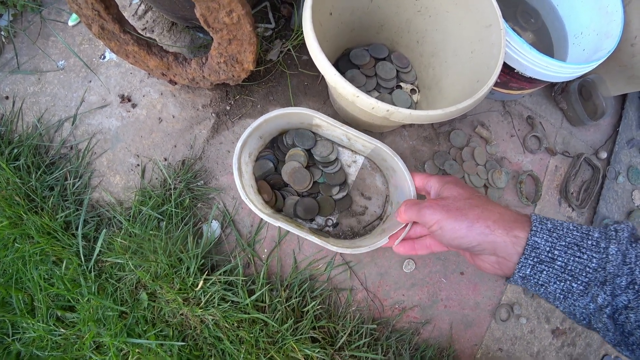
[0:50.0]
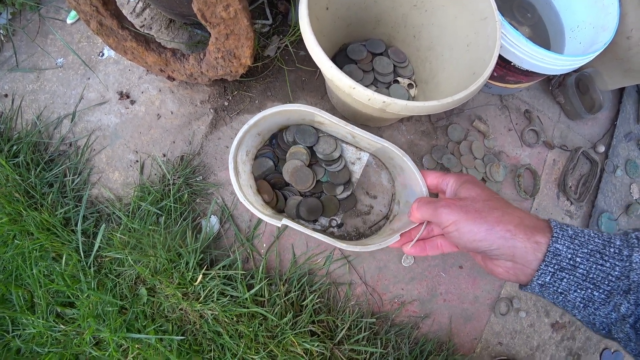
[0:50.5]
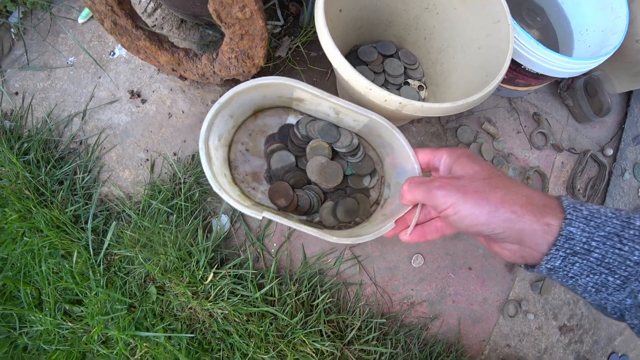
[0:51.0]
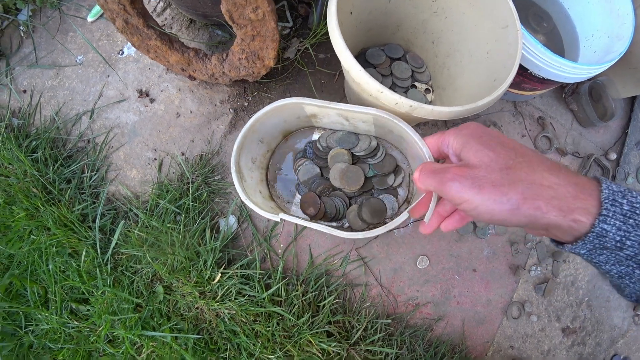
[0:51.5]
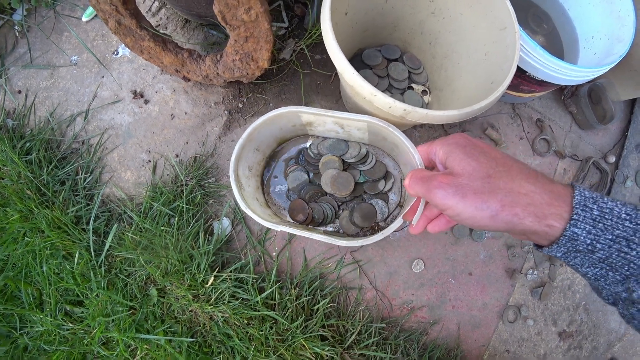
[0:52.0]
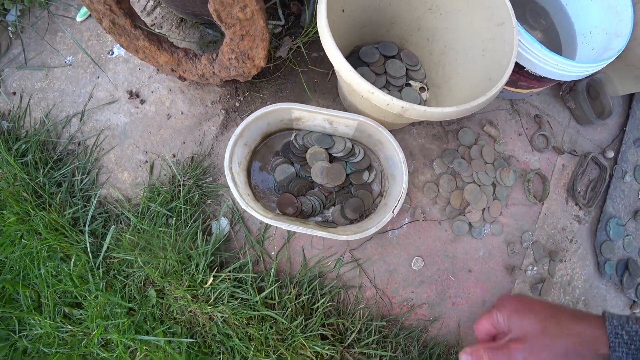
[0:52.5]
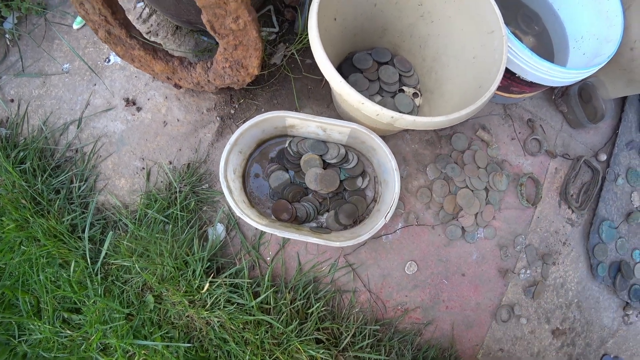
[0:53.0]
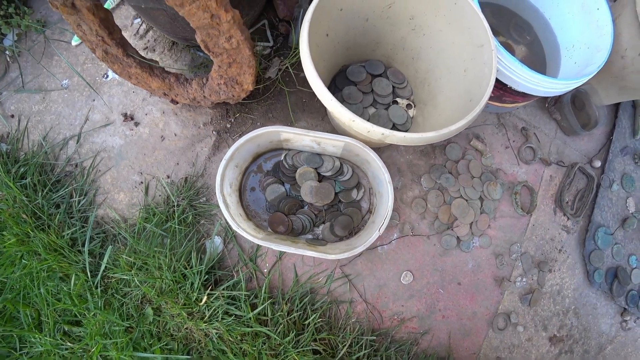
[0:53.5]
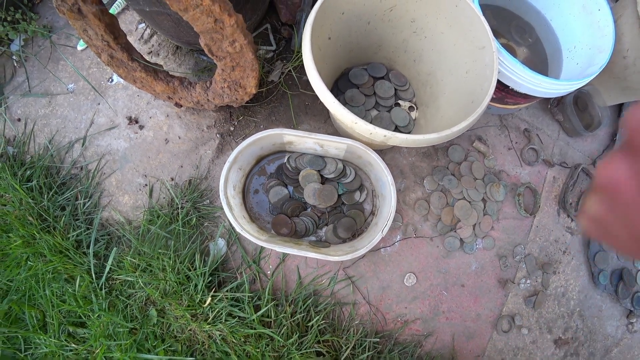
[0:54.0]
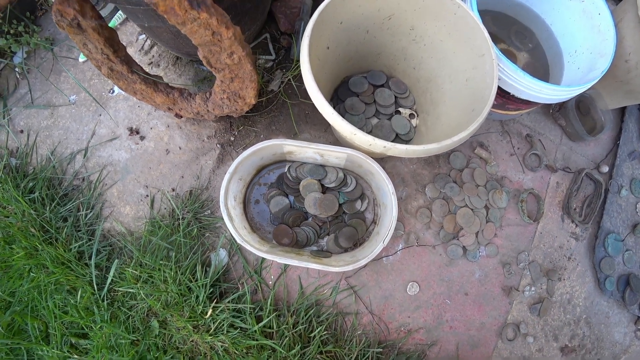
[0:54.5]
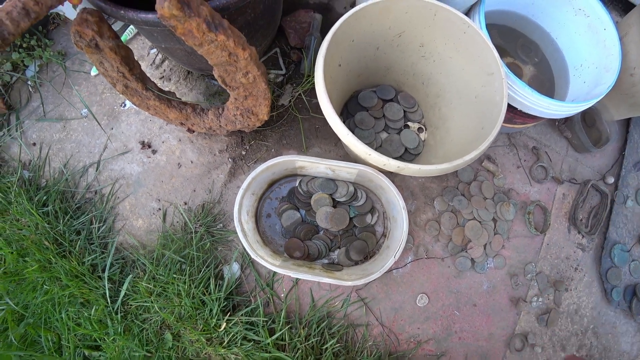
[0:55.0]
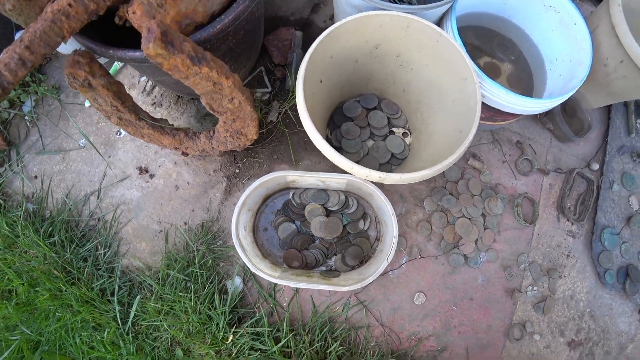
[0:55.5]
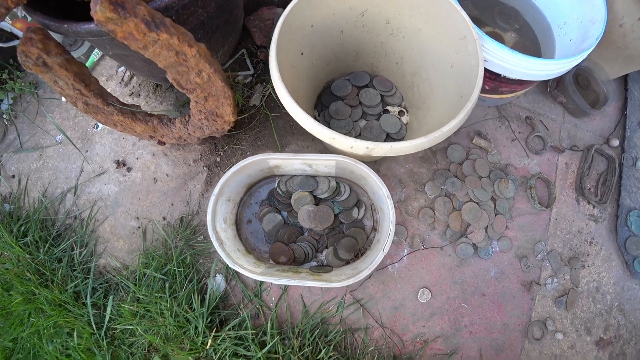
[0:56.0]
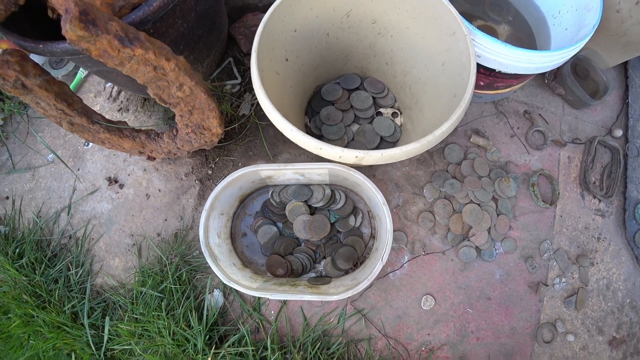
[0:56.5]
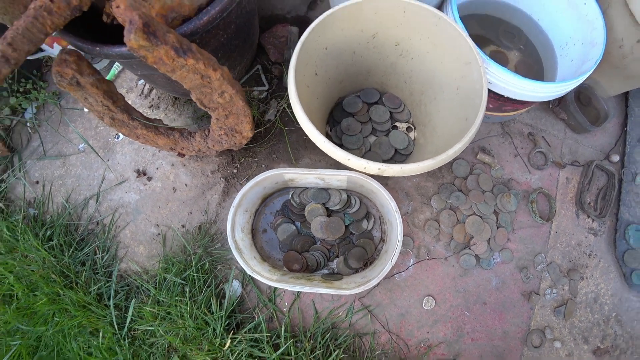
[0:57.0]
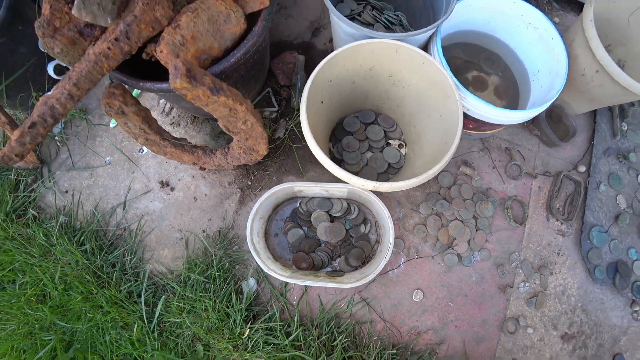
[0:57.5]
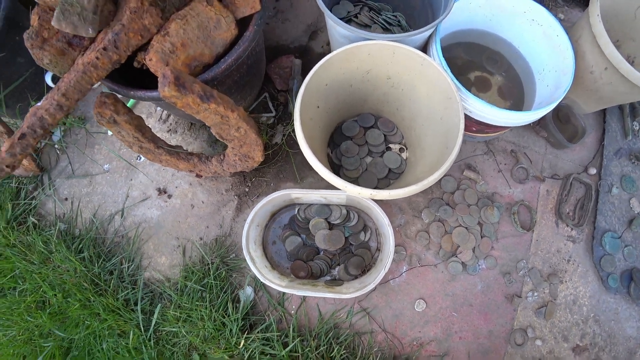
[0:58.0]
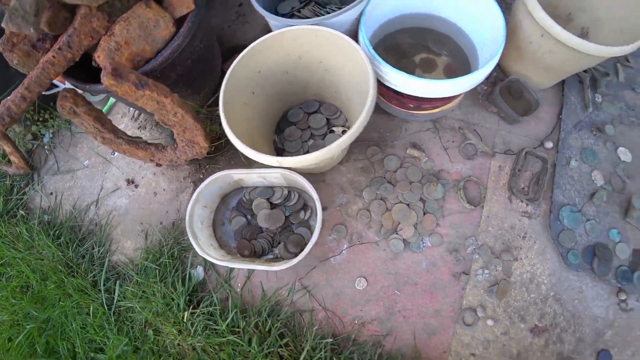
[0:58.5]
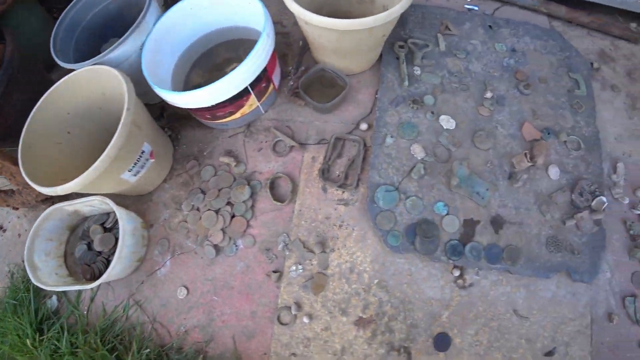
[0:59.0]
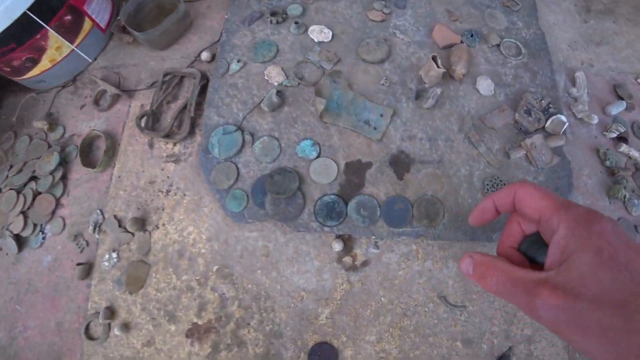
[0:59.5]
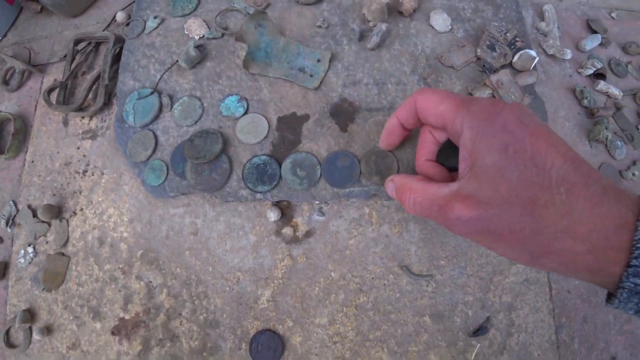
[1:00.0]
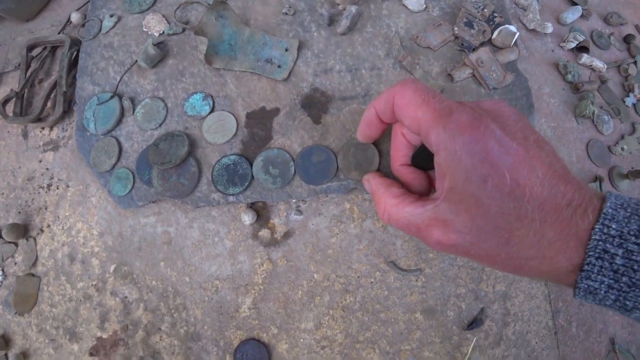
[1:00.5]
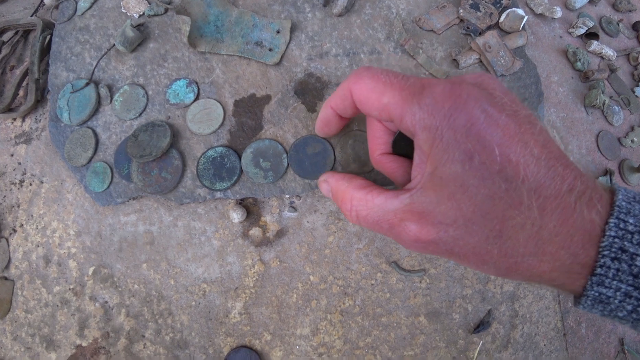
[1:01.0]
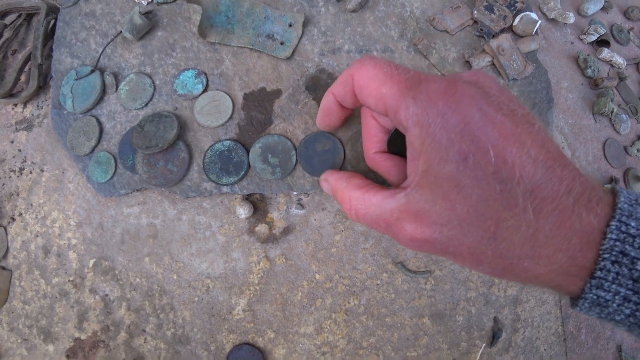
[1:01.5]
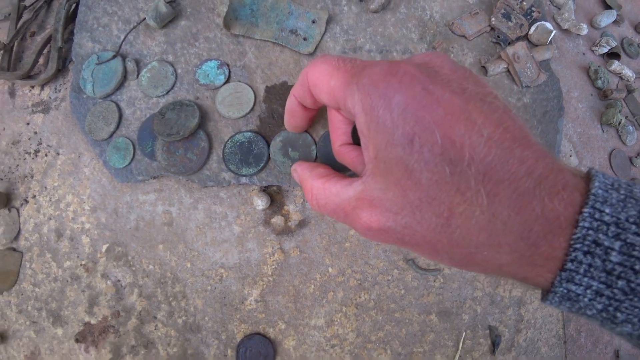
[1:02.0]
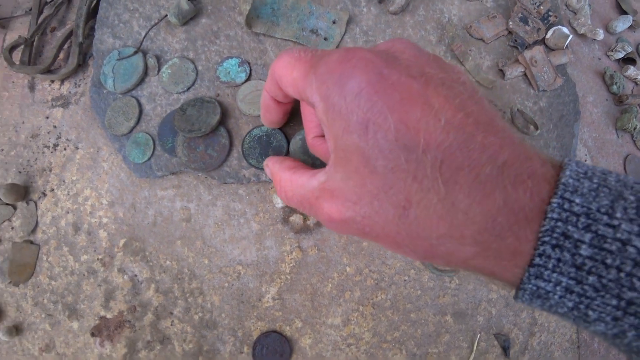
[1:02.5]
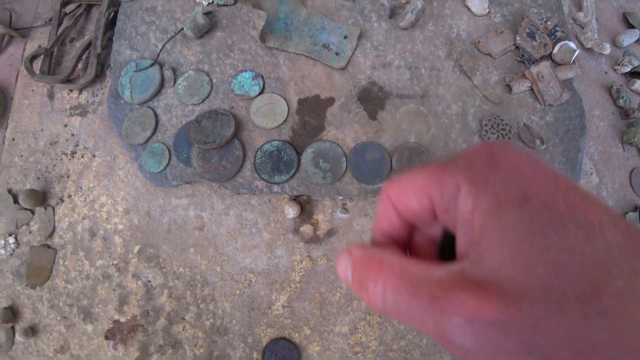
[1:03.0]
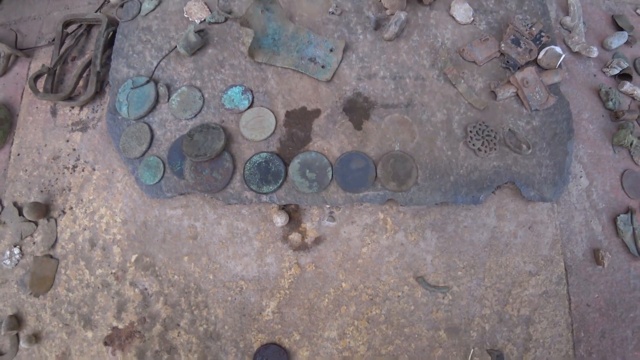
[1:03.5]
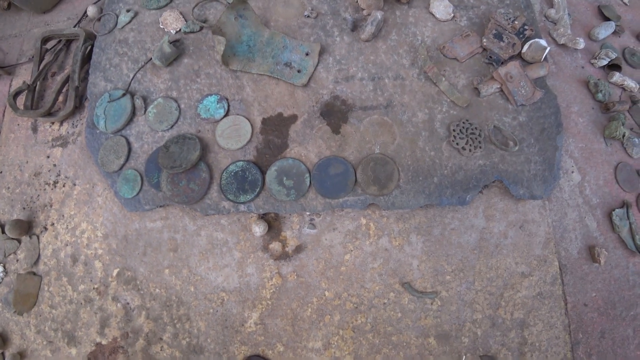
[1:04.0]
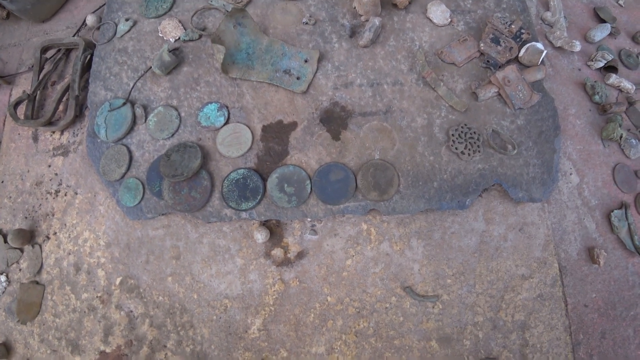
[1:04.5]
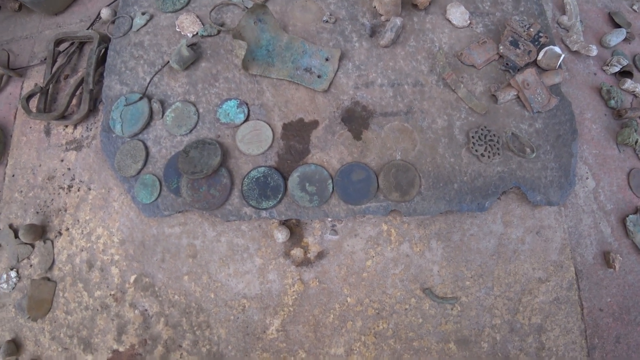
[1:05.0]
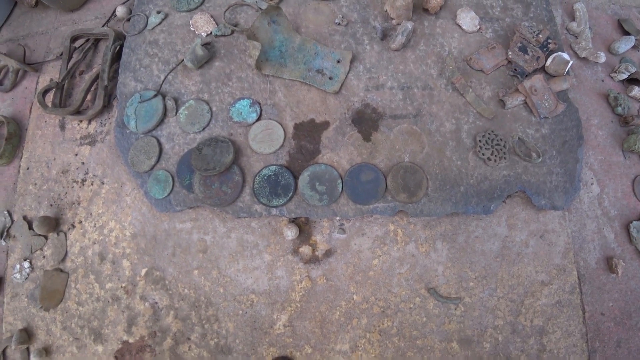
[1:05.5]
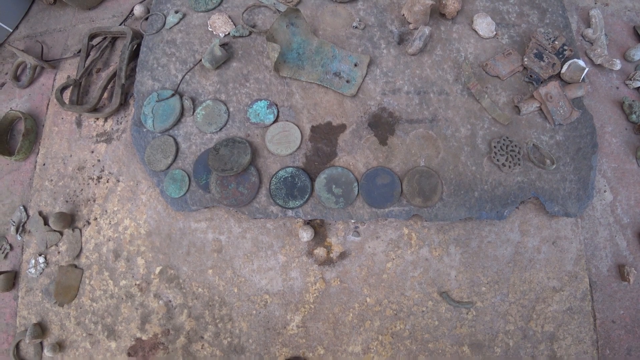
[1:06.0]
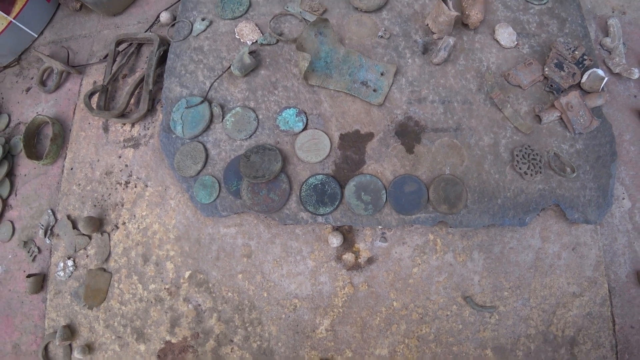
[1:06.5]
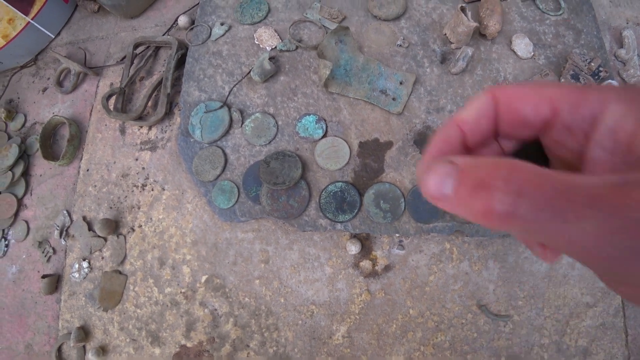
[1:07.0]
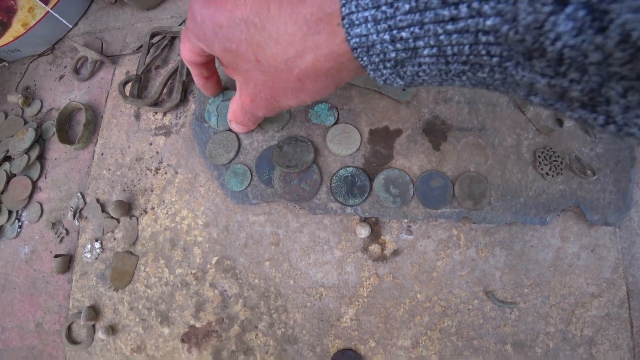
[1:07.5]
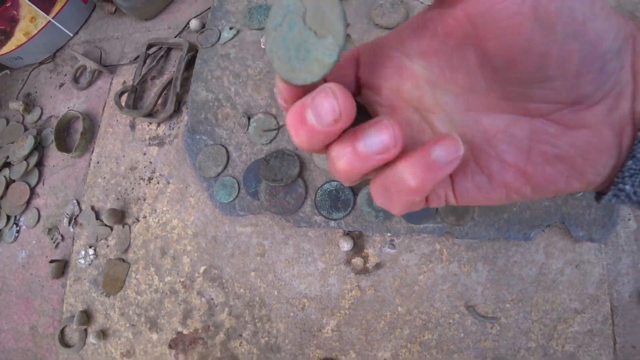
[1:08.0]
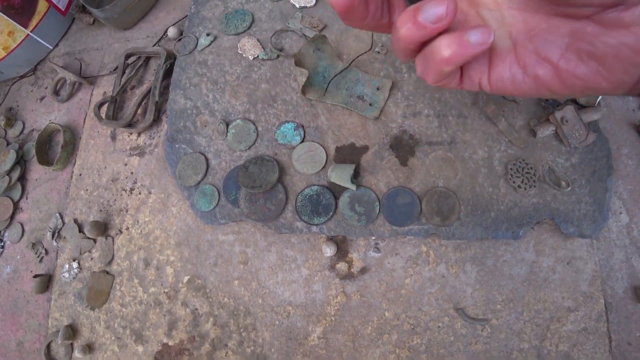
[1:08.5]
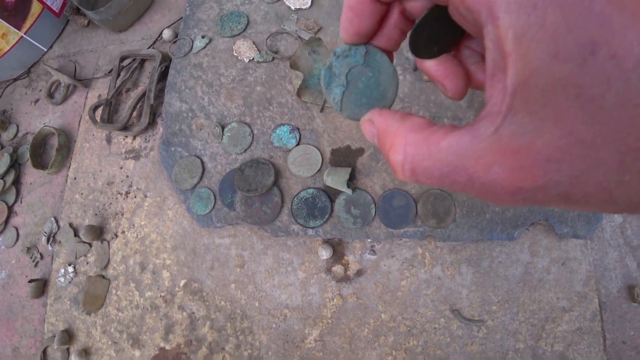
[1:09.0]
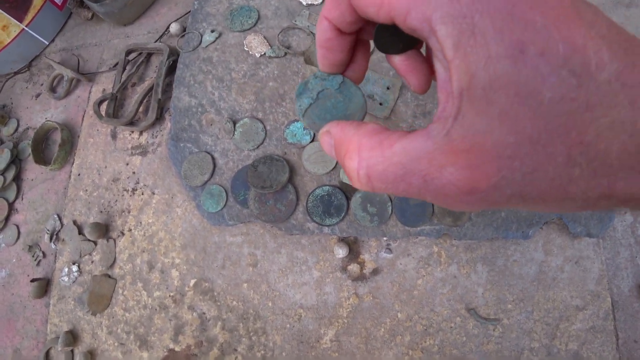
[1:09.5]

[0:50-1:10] The hand comes up holding the oval ice cream or margarine tub, which has maybe 30 or 40 coins and a little water in it. He puts it down, moves the camera up and down a little, and then moves it to the right, where a kind of square area is laid out with many more coins. Some have a lot of verdigris on them and a sort of bluish-green colour. The hand comes in towards a coin on the right and works its way through the coins without picking them up. There are many other small items, apparently a brooch or belt buckles and handcrafted metalwork with lots of little holes in it. He picks up one tatty verdigris coin, shows it to the camera in more detail, and puts it back down. Moving along to the right there is a kind of square stone; he works his way down a row of four coins before picking up one at the far left and showing it to the camera. He seems to be some kind of keen metal detectorist or amateur archaeologist showing what he has found.